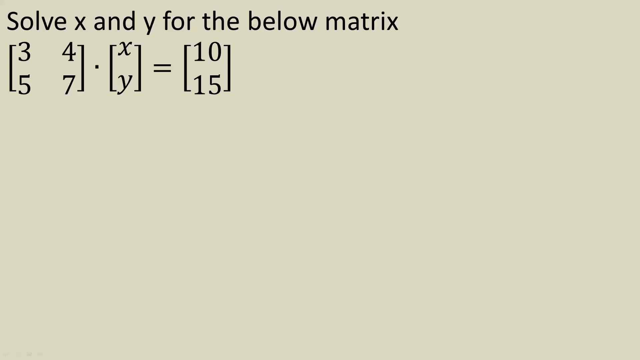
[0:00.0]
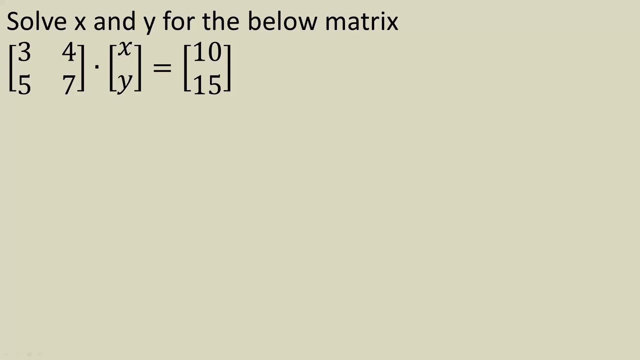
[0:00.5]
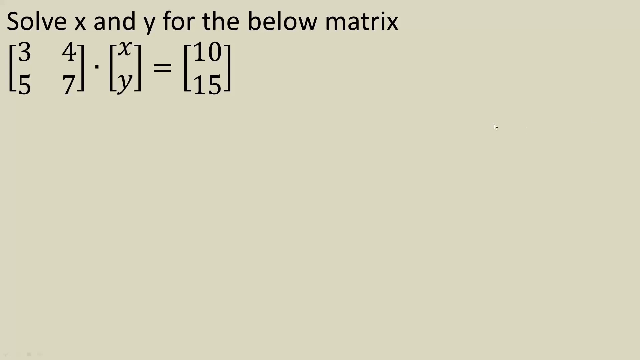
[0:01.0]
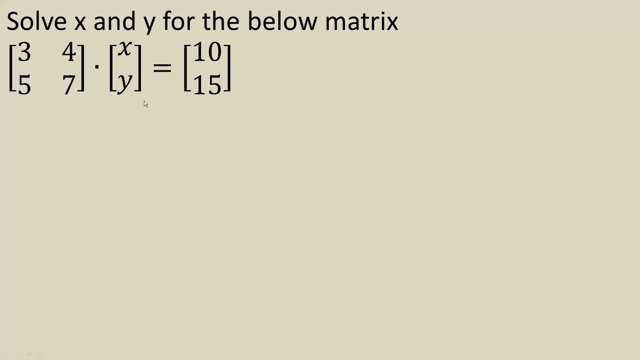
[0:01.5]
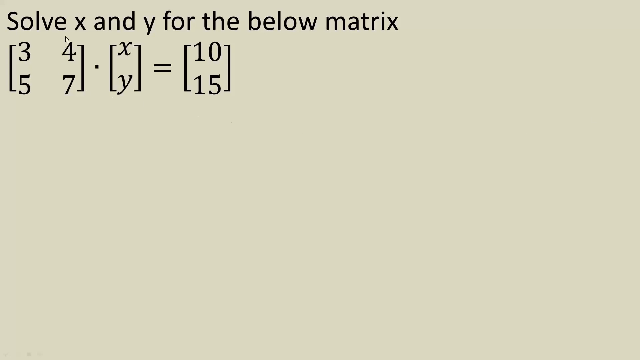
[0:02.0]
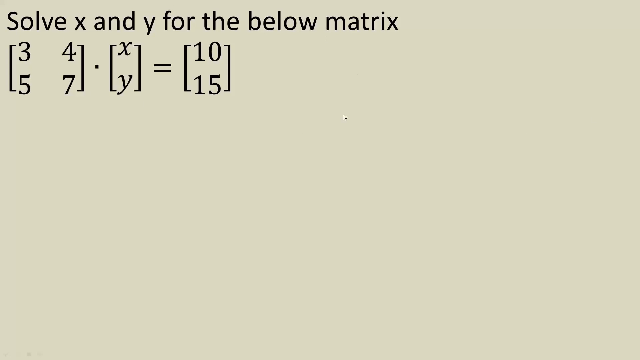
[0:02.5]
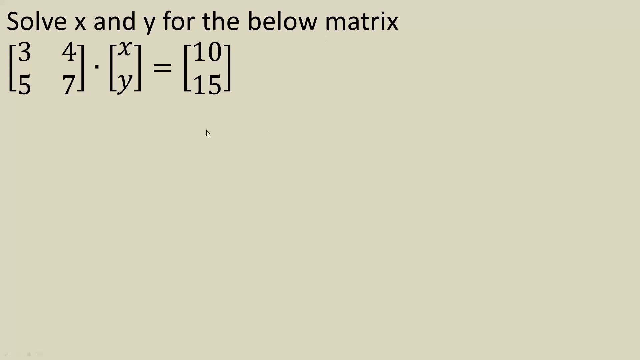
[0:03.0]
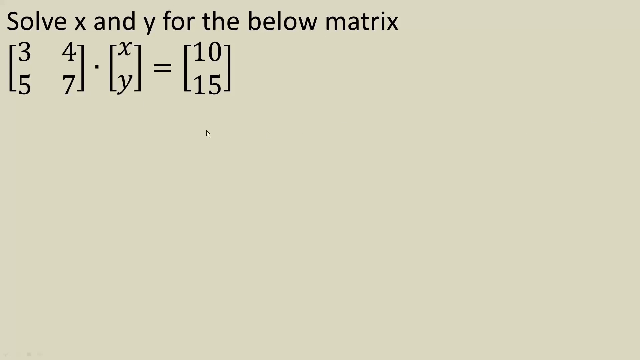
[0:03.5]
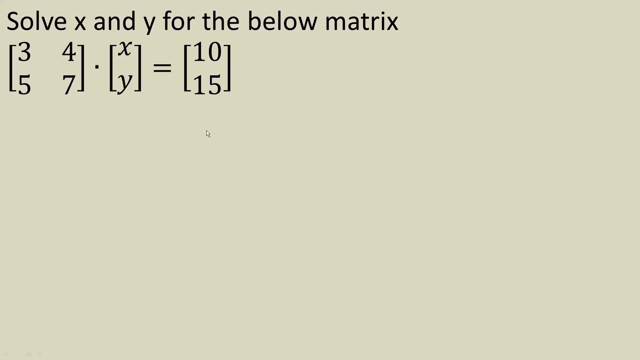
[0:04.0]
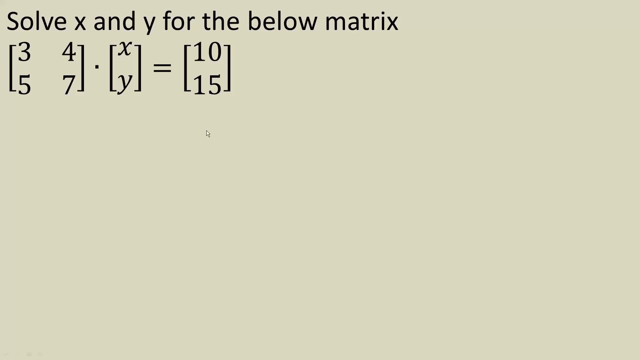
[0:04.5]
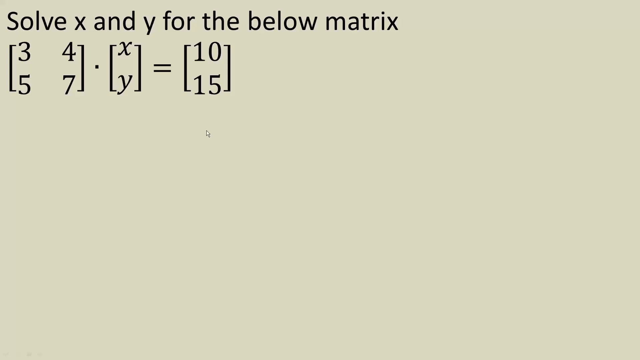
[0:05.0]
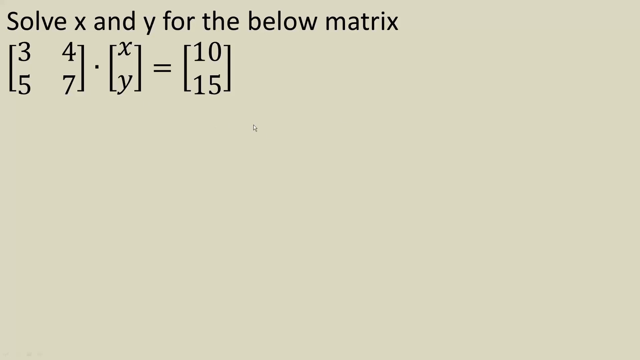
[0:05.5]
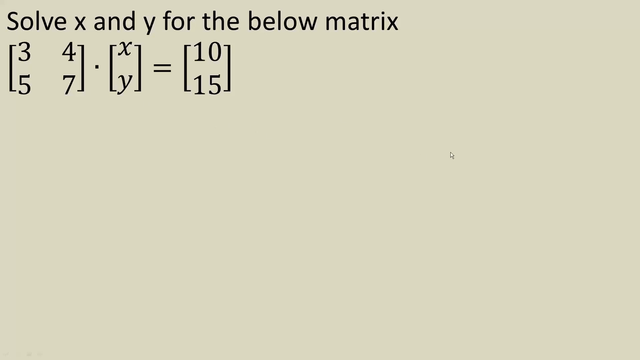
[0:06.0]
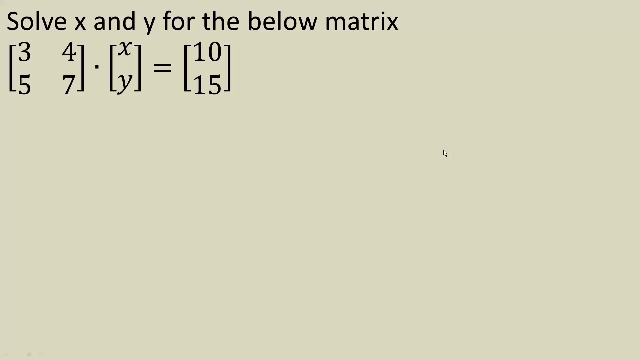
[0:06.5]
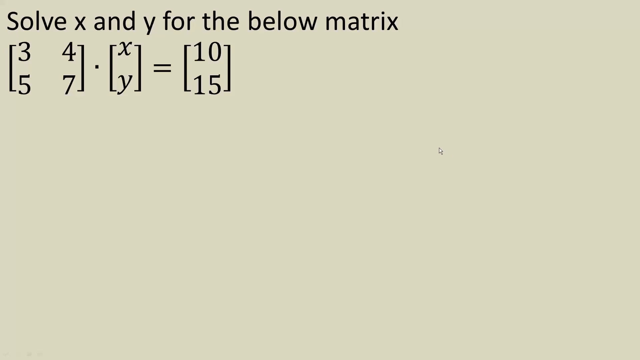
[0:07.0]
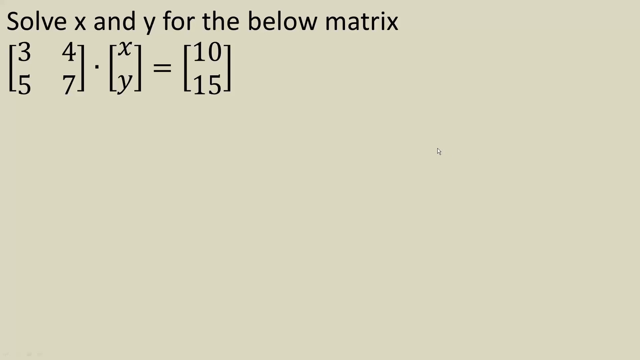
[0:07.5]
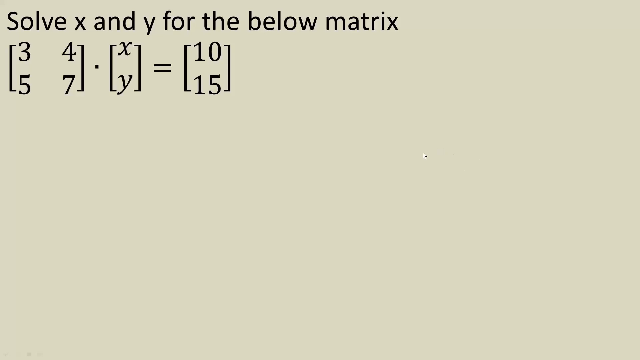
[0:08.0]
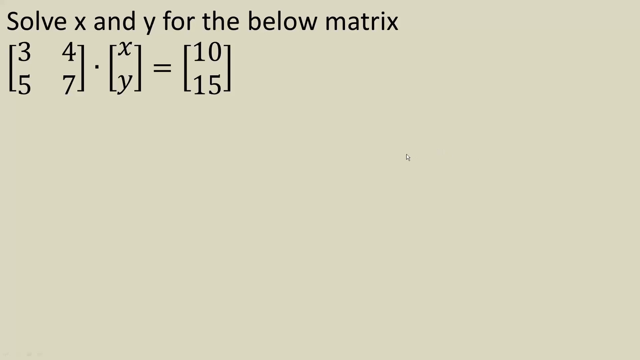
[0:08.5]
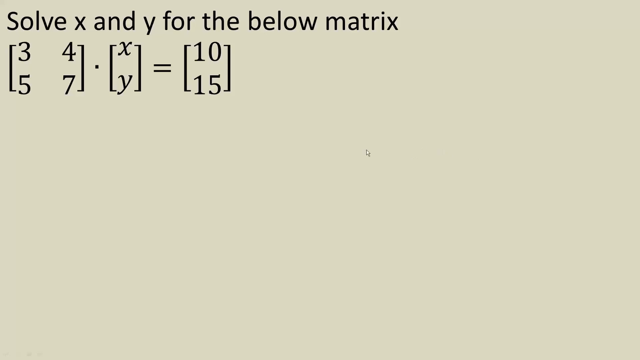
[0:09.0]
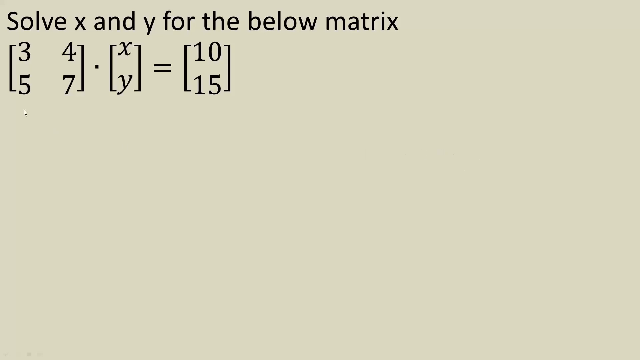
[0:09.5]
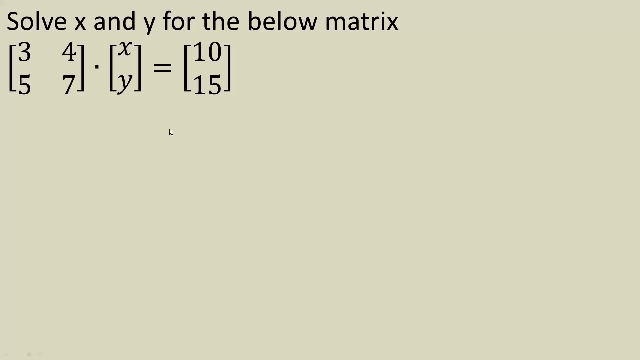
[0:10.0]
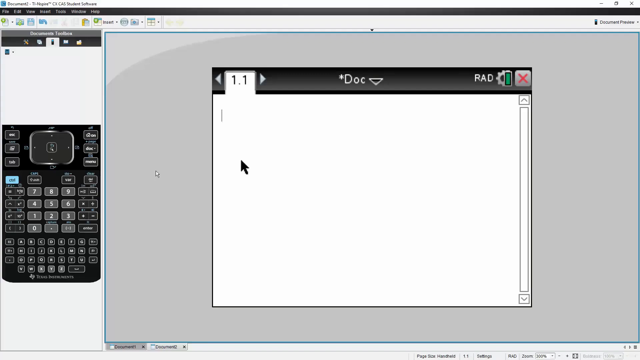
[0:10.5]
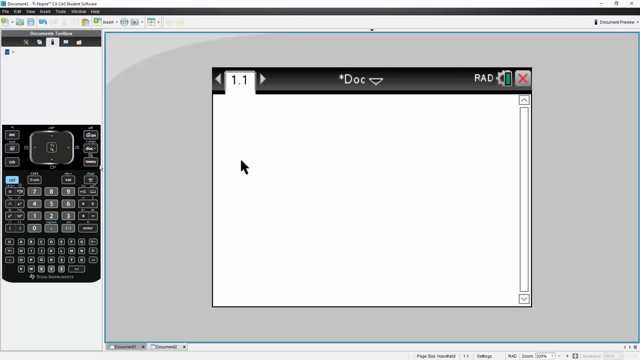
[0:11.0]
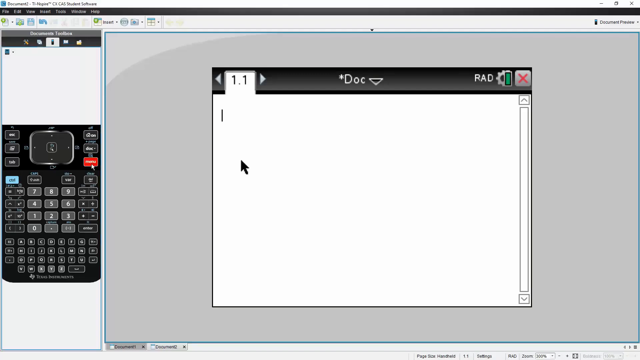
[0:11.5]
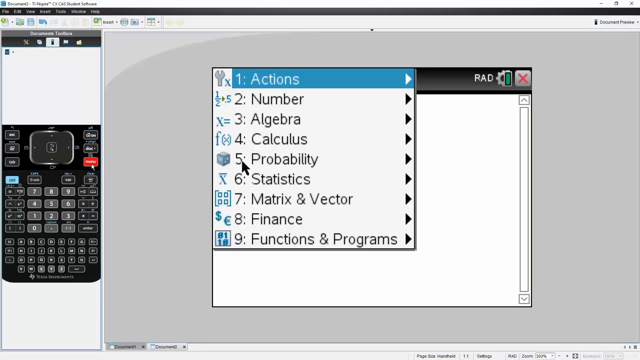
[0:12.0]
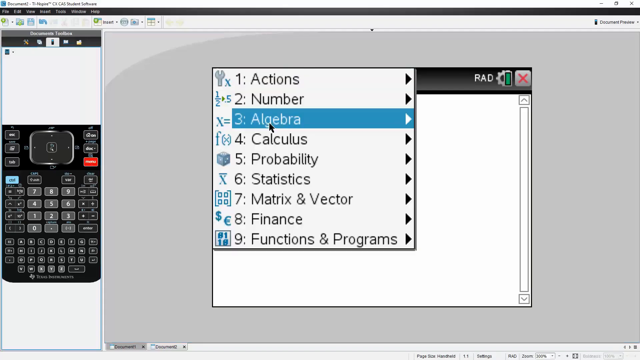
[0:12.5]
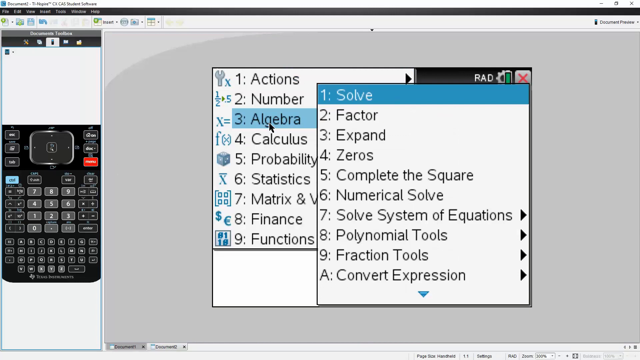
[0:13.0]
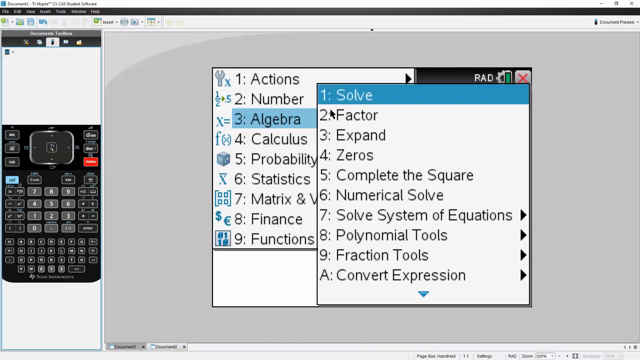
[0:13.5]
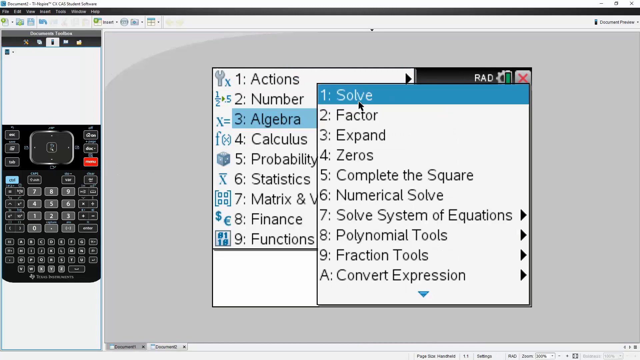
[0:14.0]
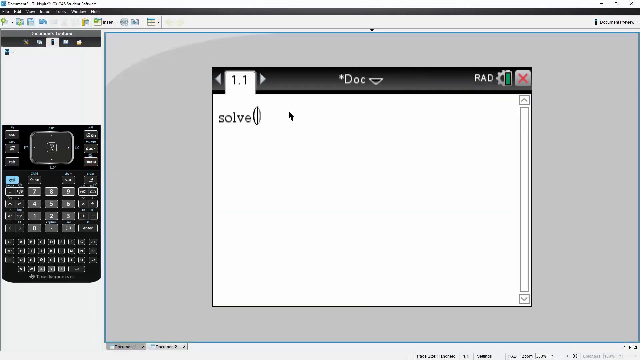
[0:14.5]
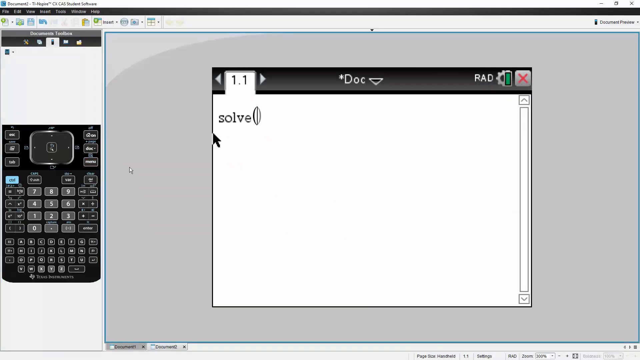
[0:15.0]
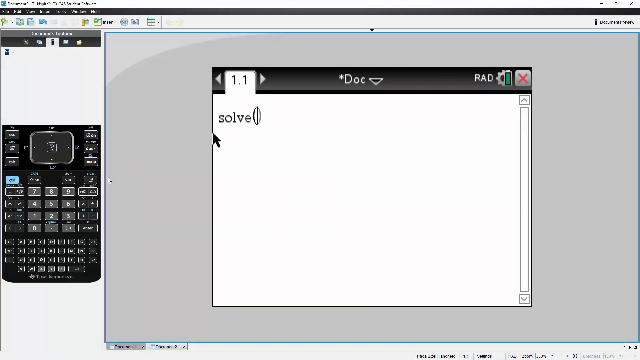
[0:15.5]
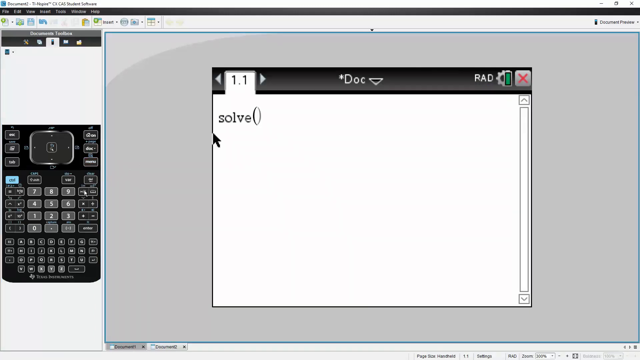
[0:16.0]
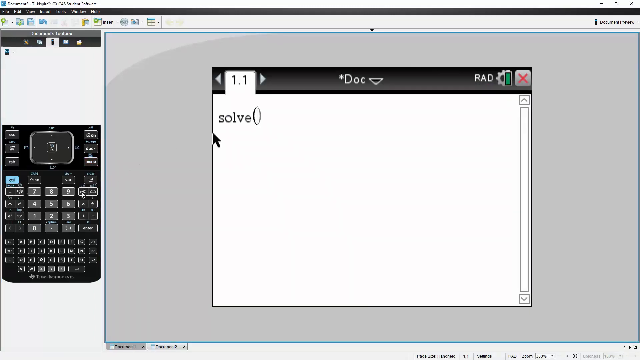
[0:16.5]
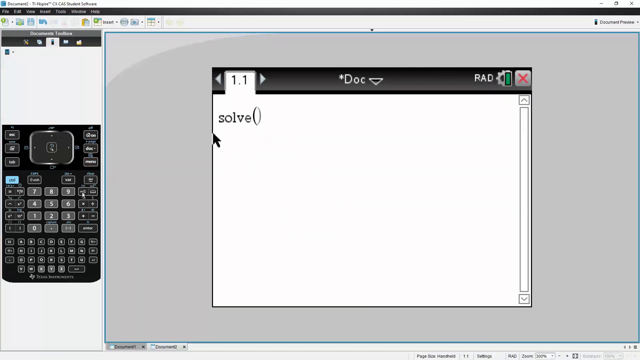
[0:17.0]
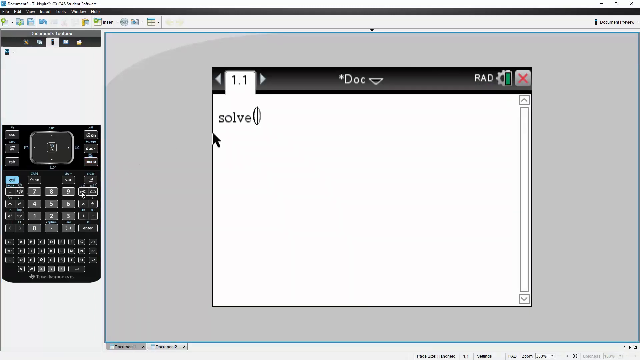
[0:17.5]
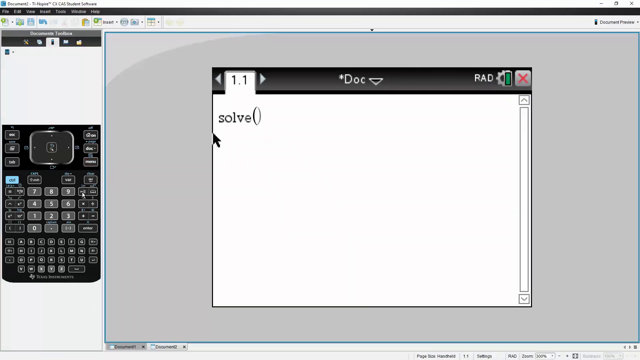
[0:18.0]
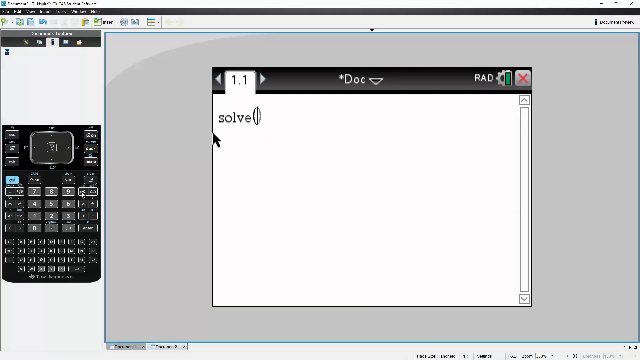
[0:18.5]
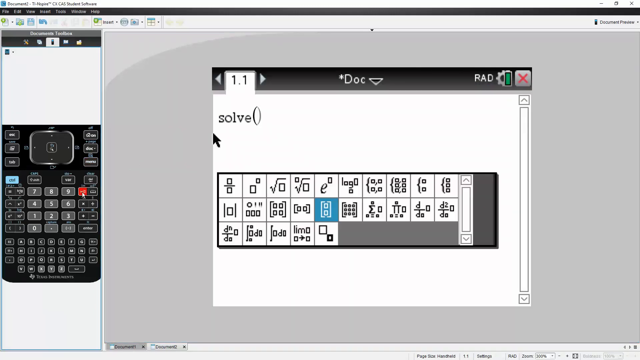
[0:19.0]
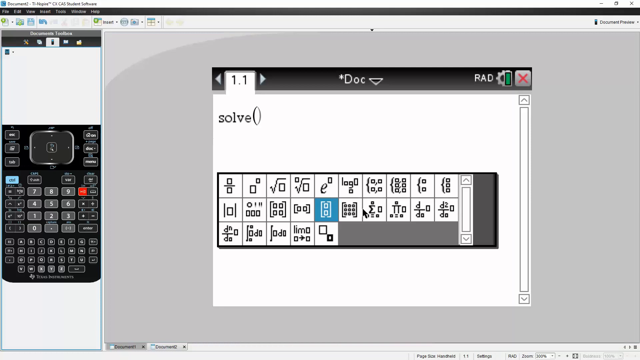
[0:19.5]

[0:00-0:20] A mathematics problem asks to solve for x and y in a matrix equation: the matrix 3, 4, 5, 7 times x, y equals 10, 15. The problem stays on screen for around 10 seconds, then the view changes. A calculator is brought up and shown on the left-hand side. In the center of the screen, in a separate large window, is something called "doc", with "rad", apparently radians, at the top right; it is resizable calculating software. A mouse cursor is visible. The menu is opened, showing choices such as actions, number, algebra and calculus, and choice number three, algebra, is selected. Another sub-menu pops up beside the first menu, and solve is chosen. Solve brings up a further screen with an input for the values to solve in the matrix.